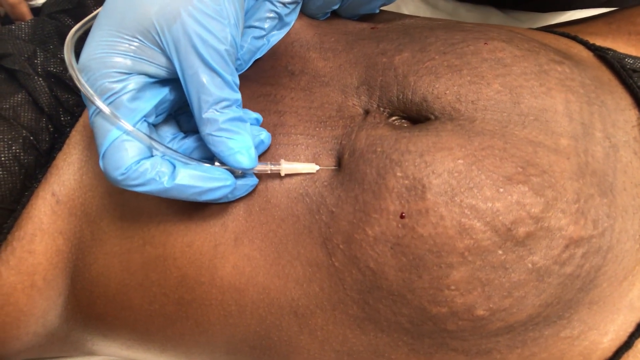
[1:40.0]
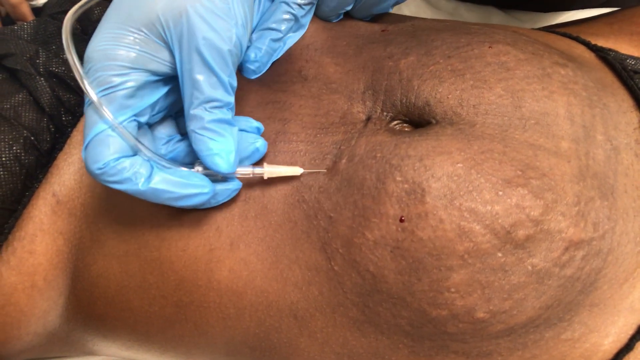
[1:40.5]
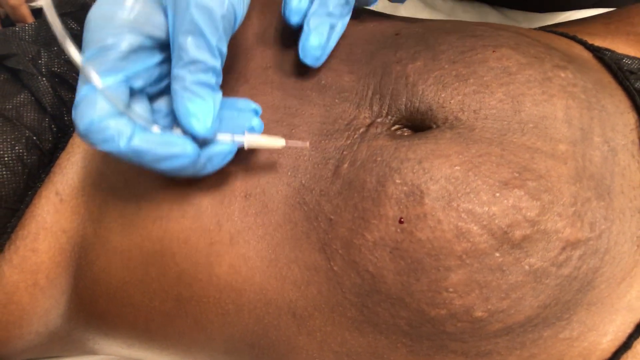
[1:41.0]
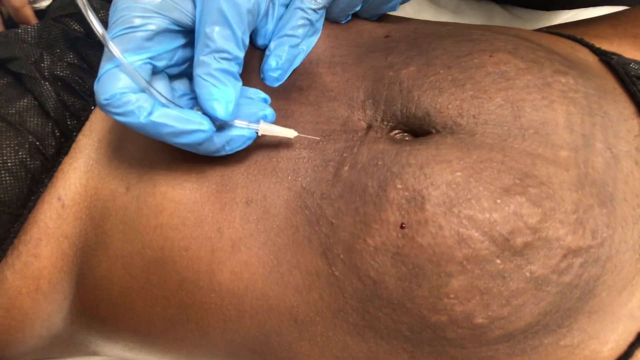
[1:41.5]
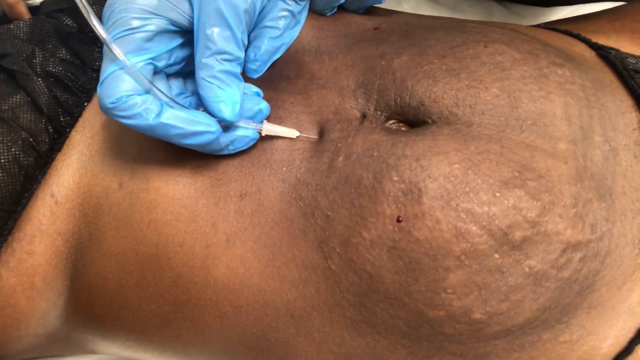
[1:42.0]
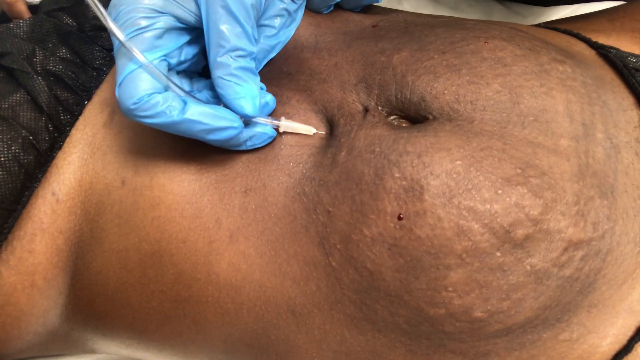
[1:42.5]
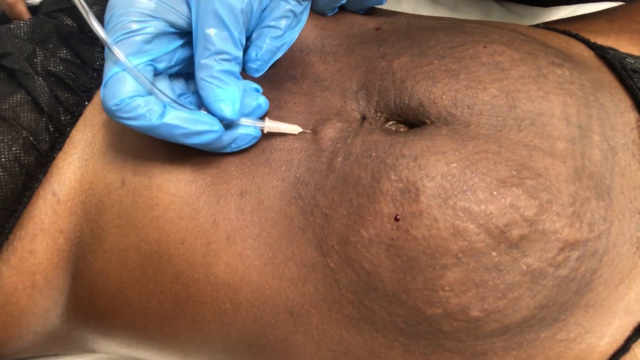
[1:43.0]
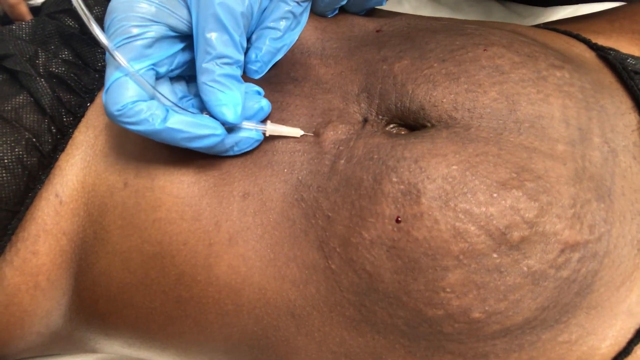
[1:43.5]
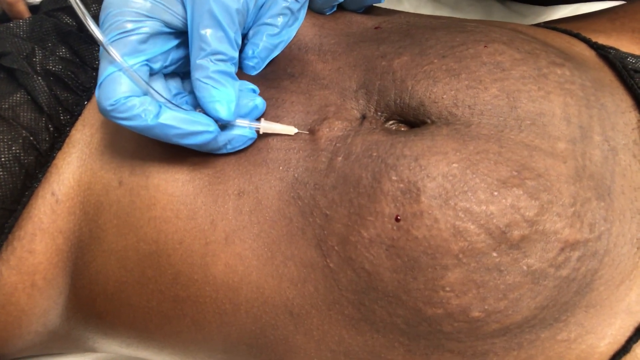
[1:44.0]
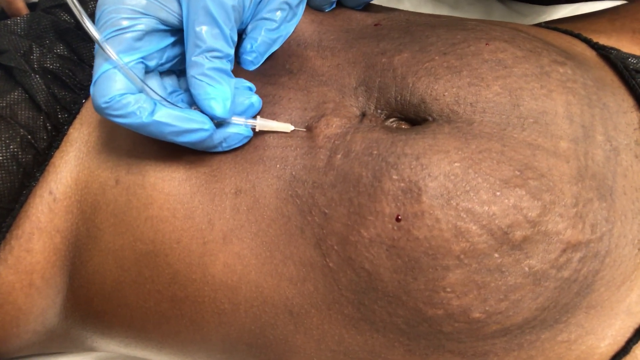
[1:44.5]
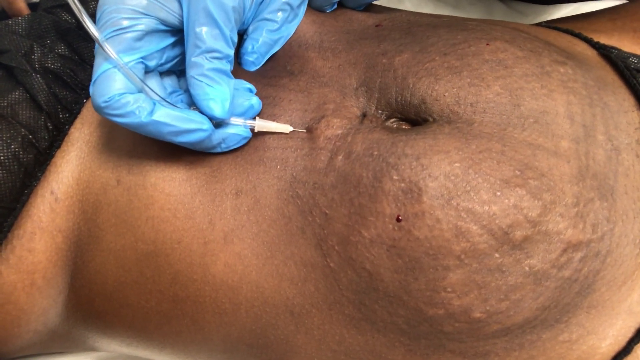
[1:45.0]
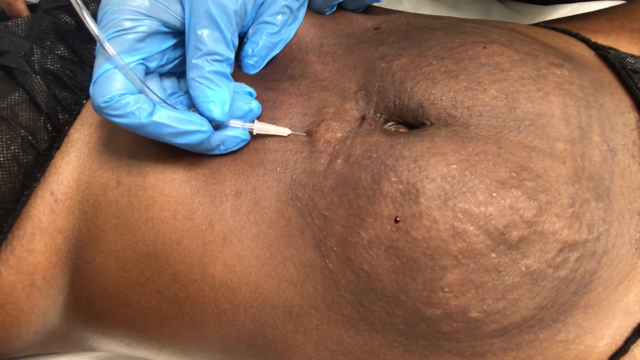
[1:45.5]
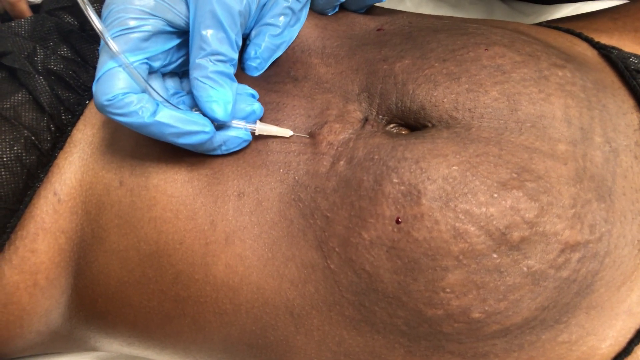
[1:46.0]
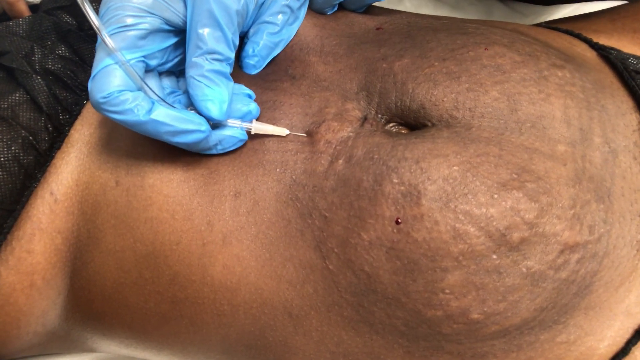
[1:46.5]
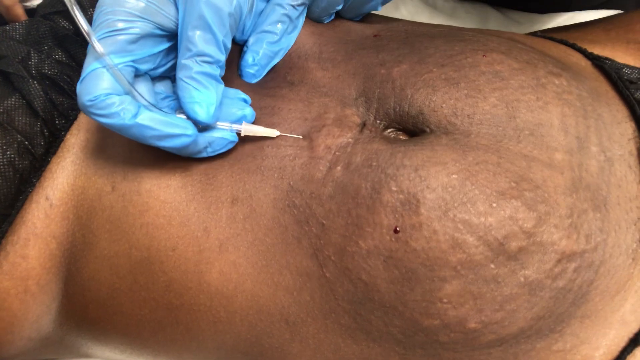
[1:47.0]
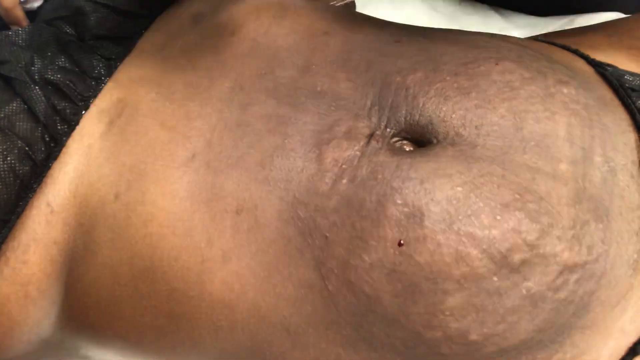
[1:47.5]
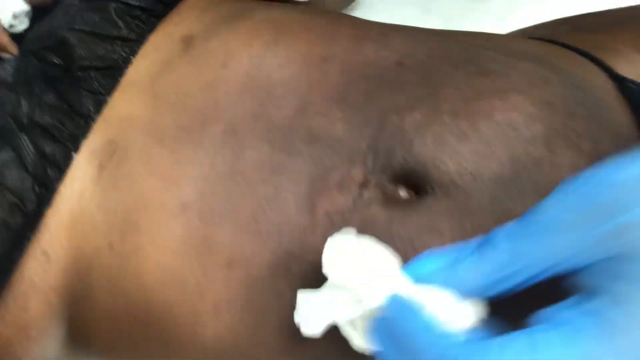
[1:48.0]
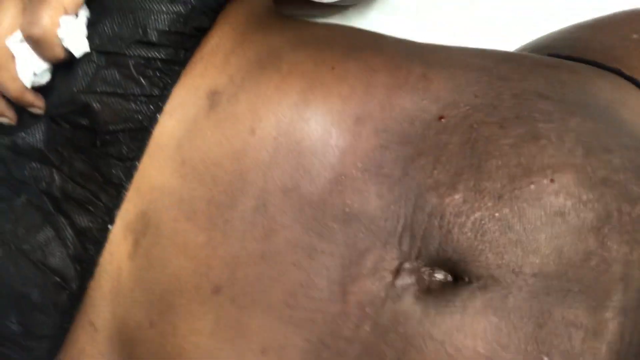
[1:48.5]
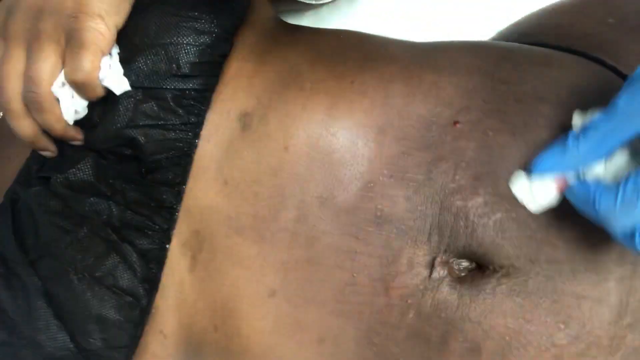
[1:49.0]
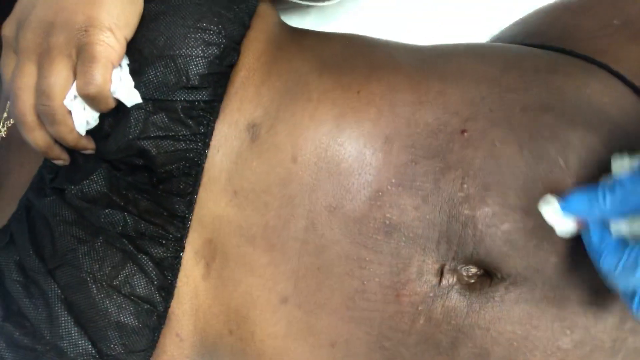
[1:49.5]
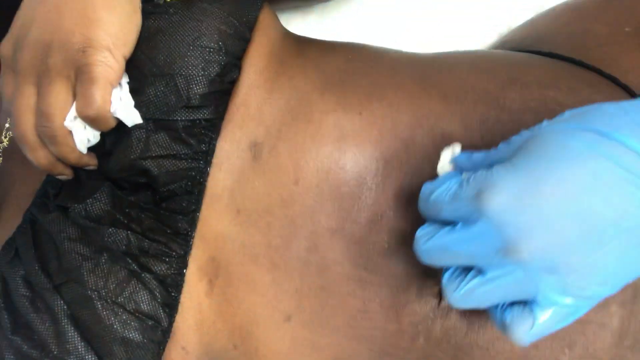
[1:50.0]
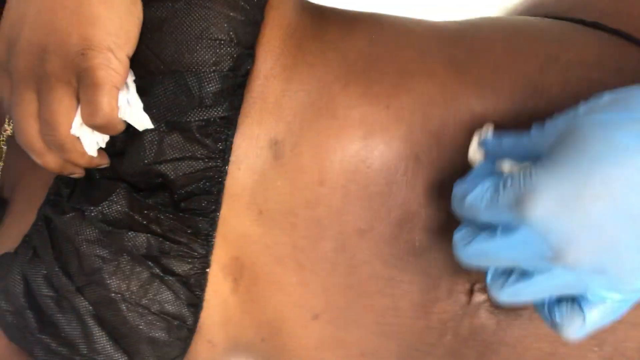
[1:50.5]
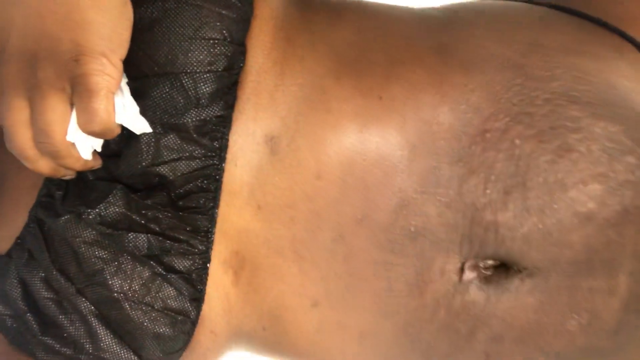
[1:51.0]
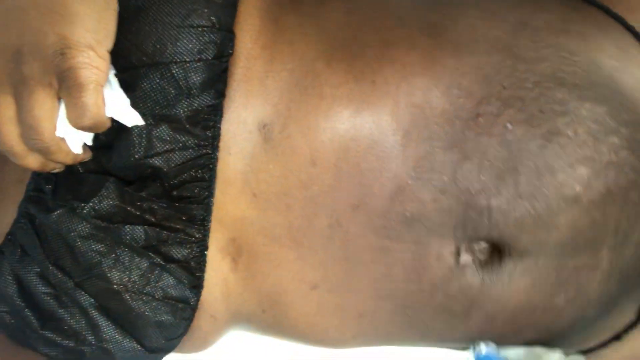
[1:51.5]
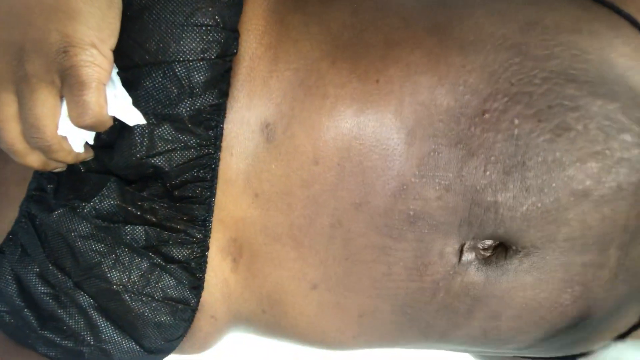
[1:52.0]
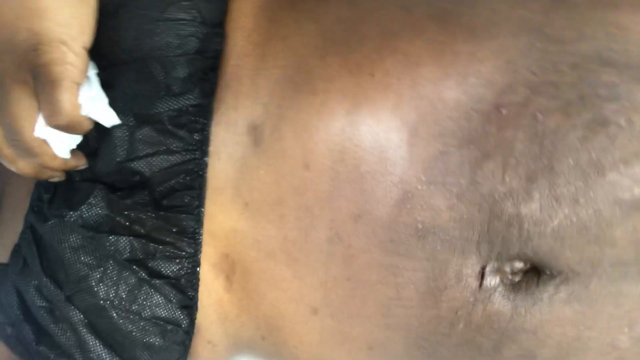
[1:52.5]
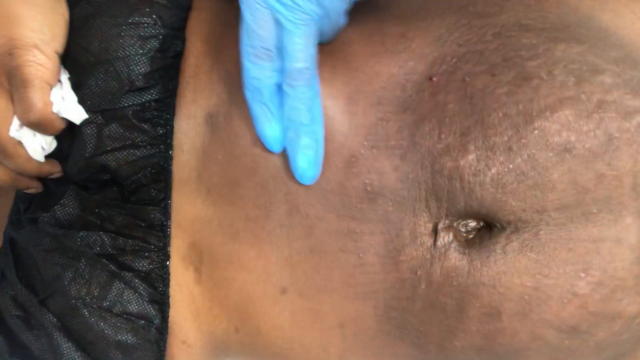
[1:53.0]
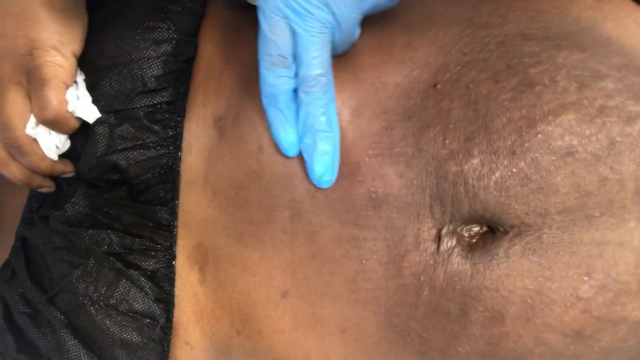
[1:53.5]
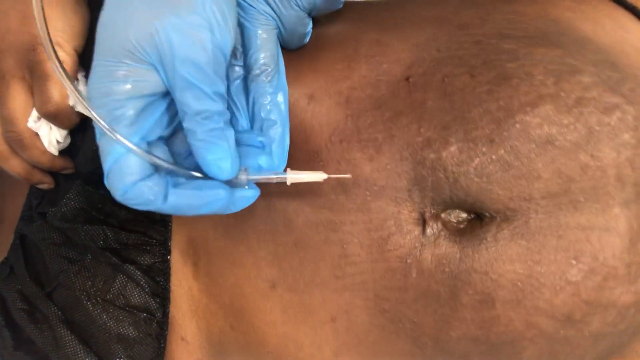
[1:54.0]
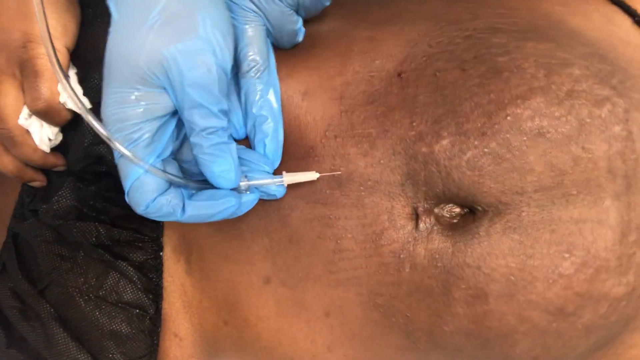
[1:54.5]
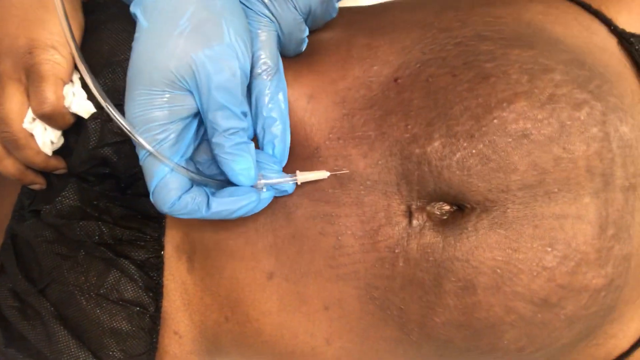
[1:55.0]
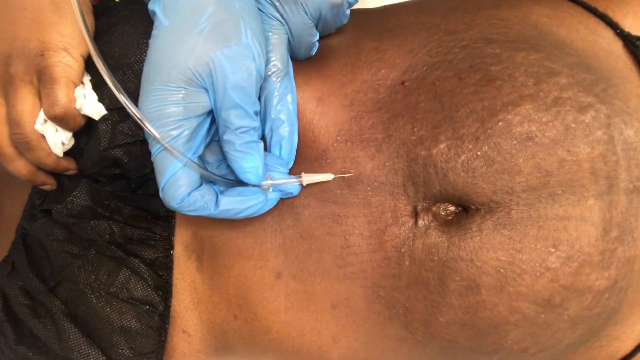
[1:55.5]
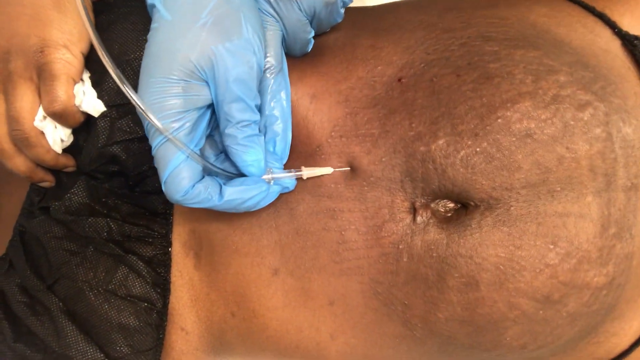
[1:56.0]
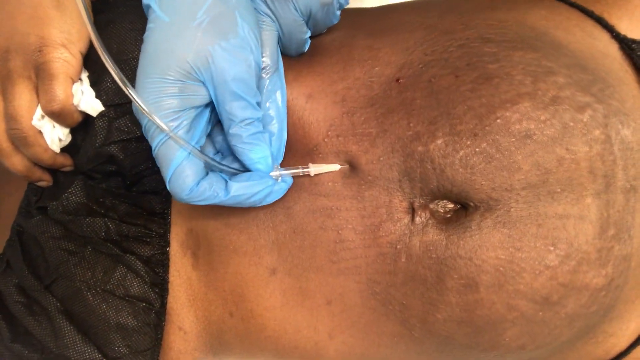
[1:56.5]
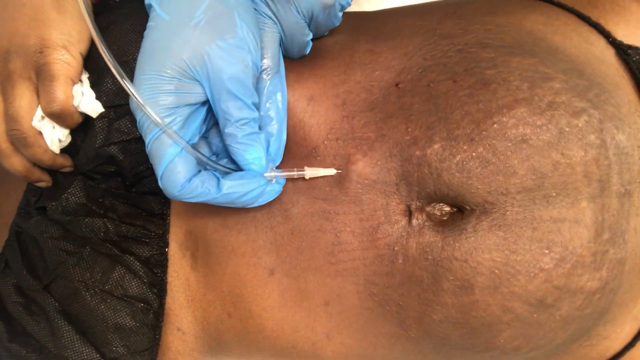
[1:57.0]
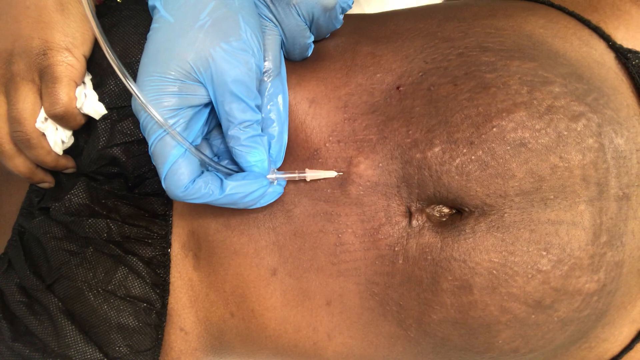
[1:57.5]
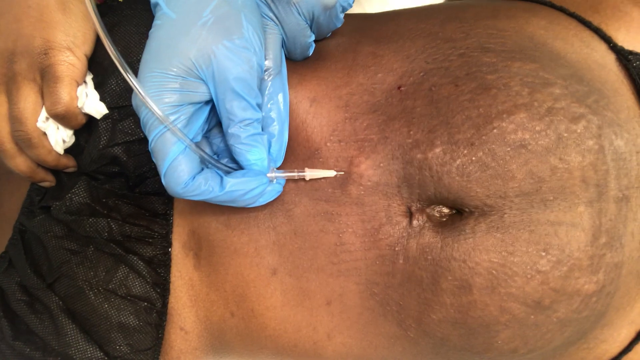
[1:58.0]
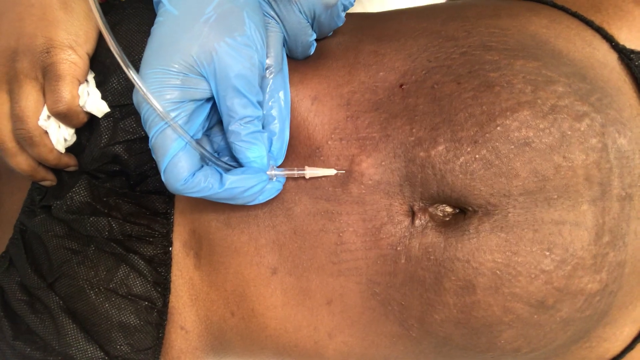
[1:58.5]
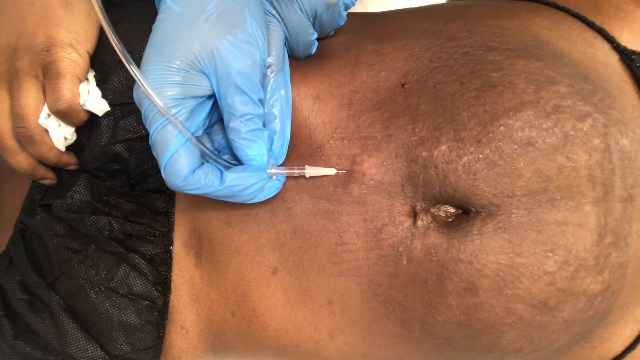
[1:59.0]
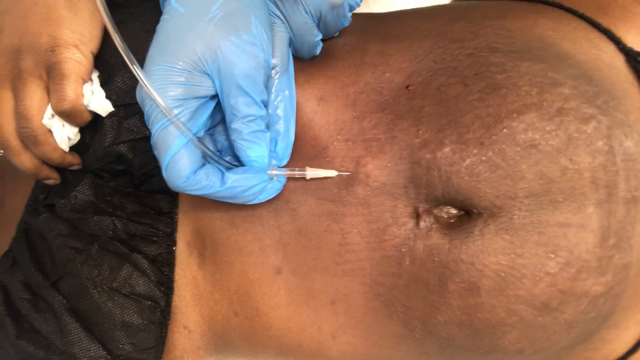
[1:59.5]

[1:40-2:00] The person with the blue latex gloves holds one hand near the belly button, either injecting or suctioning something from the brown-skinned patient's body with a needle attached to a plastic hose. Several spots of blood are visible across the stomach: two at the top of the scene, above and below the belly button, one directly above the belly button, and one close to the camera at the bottom edge. Each time the doctor injects, they jiggle the needle slightly, and the body seems to fill slightly; the appearance of wrinkles seems to have maybe been reduced as the procedure continues. The doctor rubs the top, bottom and sides of the stomach to remove the patches of blood before continuing. They insert the needle slightly above the belly button, and part of the stomach in front of the injection point starts to bulge outward slightly.